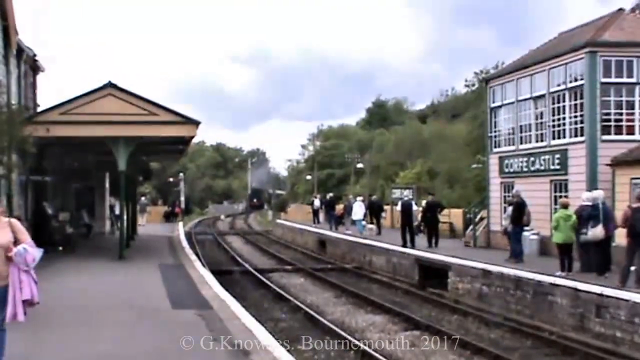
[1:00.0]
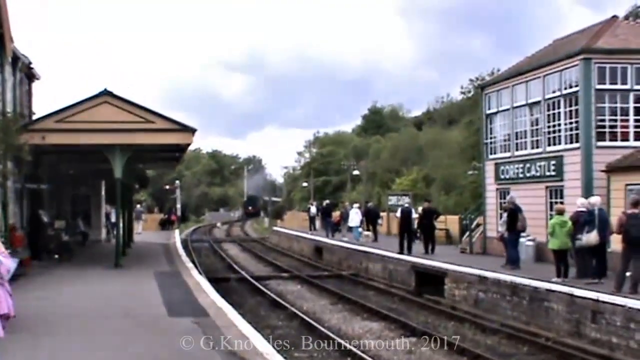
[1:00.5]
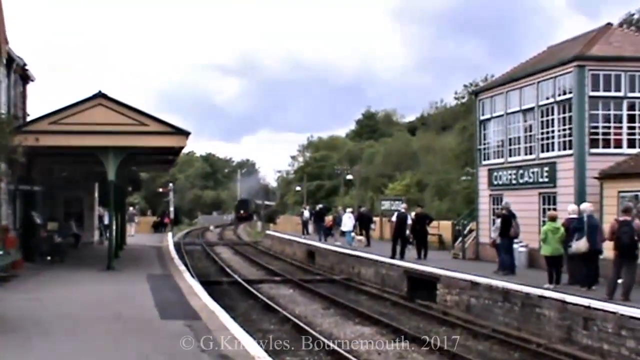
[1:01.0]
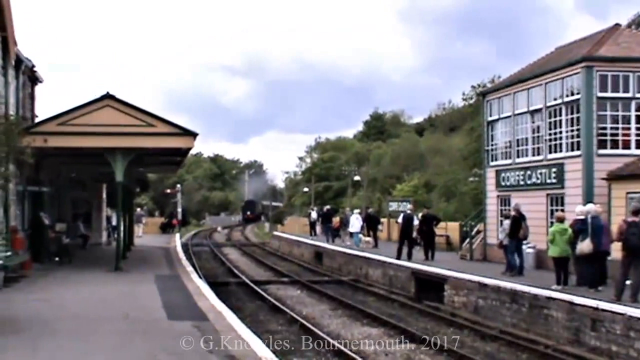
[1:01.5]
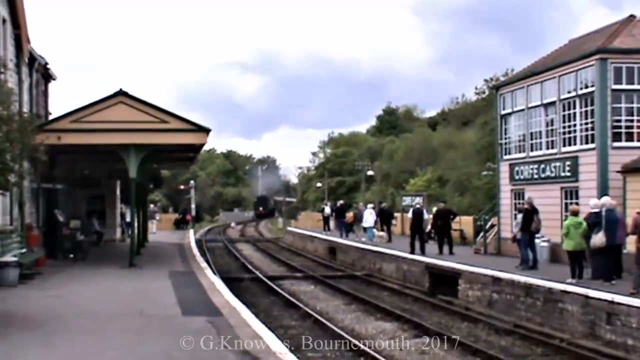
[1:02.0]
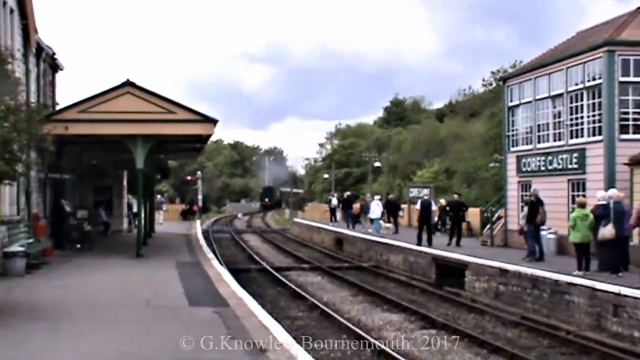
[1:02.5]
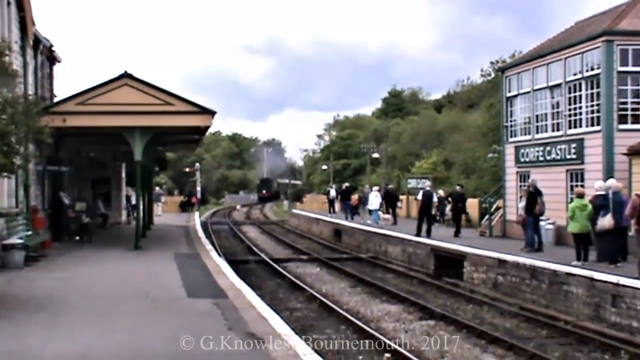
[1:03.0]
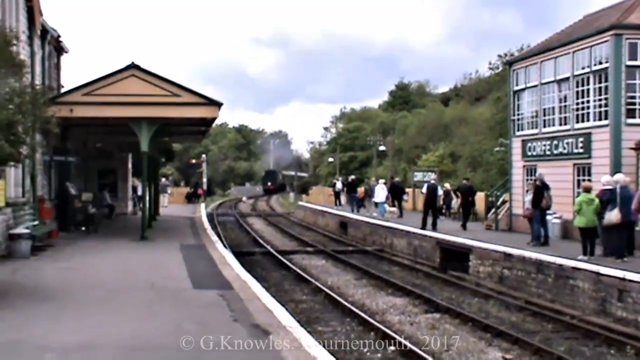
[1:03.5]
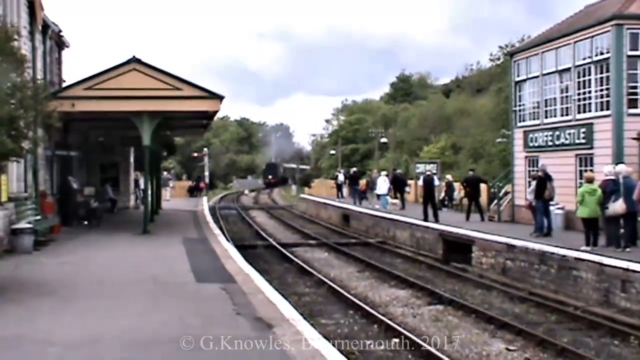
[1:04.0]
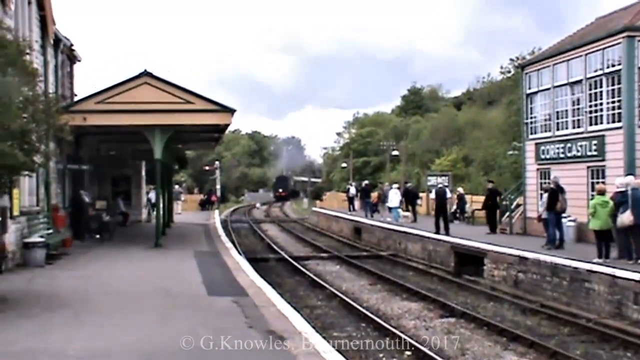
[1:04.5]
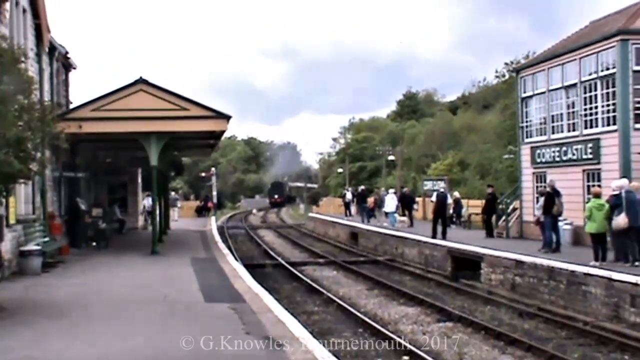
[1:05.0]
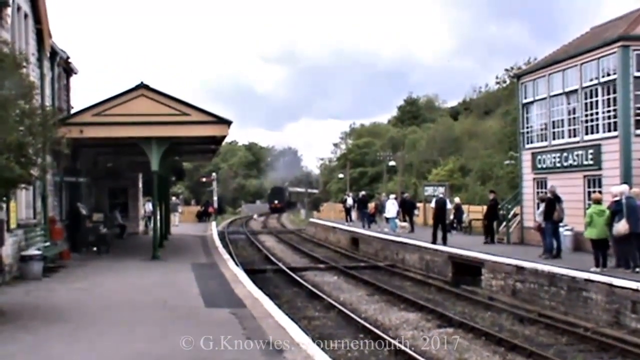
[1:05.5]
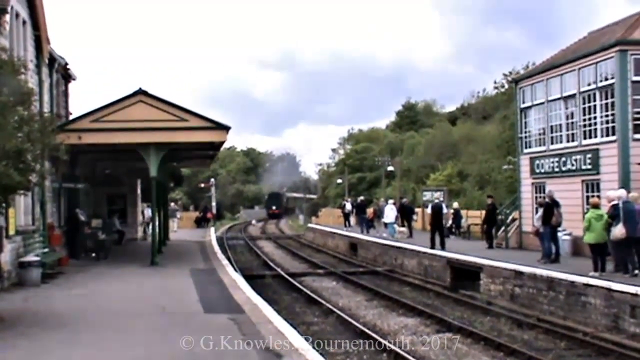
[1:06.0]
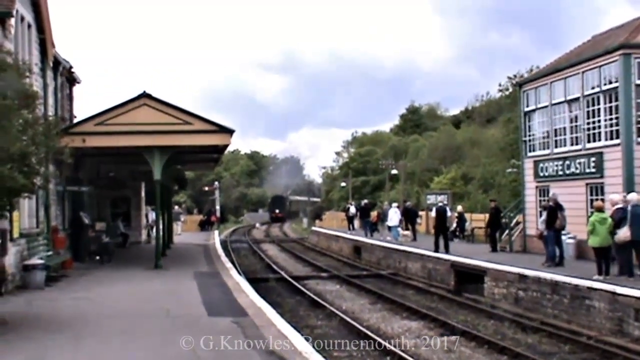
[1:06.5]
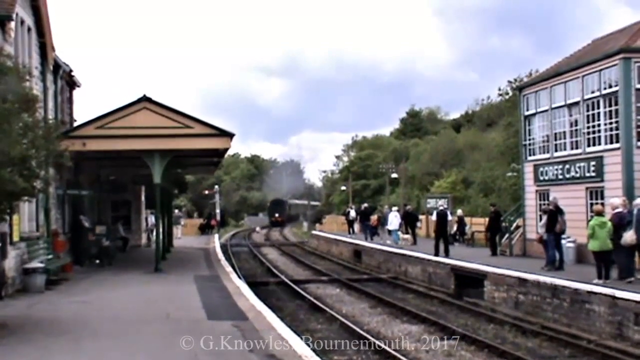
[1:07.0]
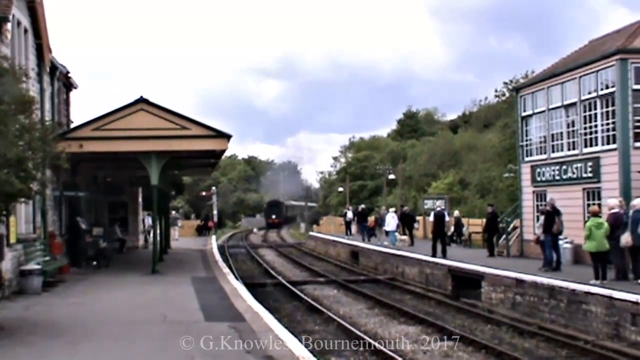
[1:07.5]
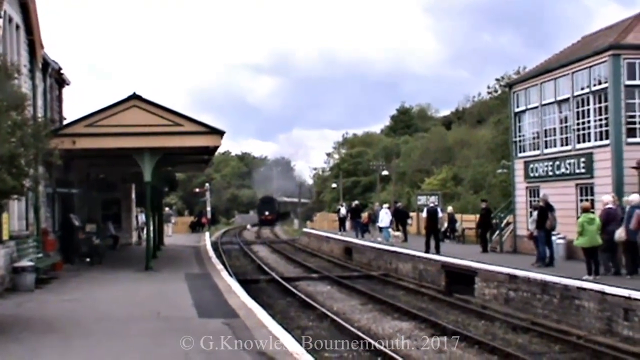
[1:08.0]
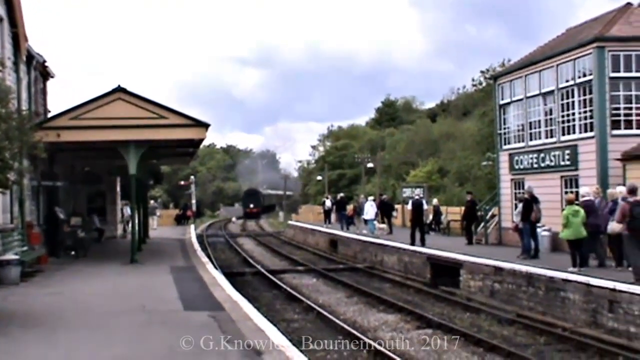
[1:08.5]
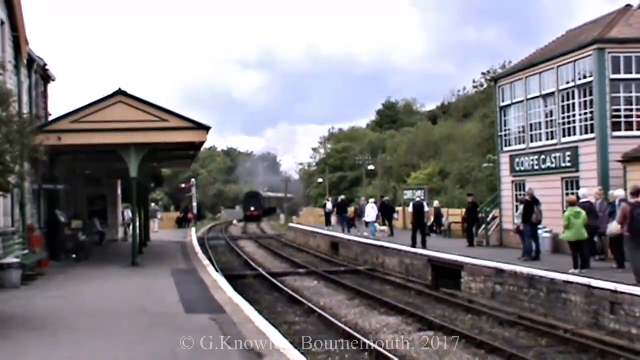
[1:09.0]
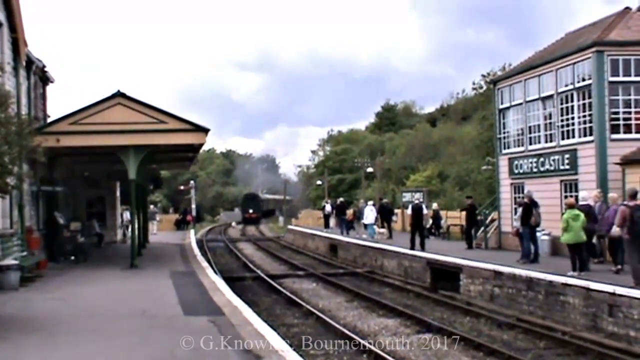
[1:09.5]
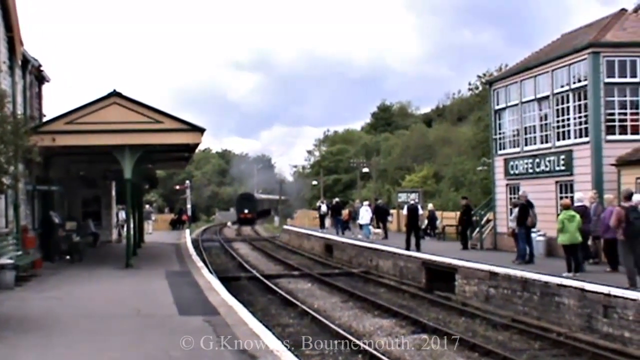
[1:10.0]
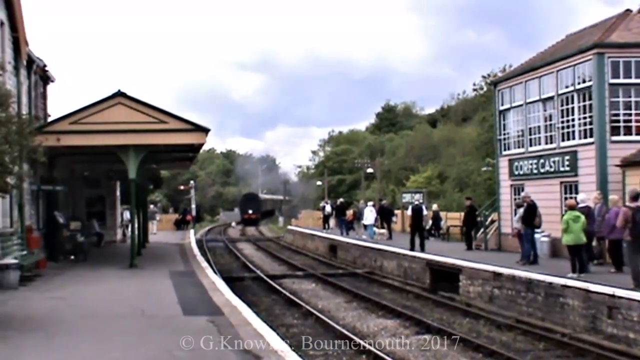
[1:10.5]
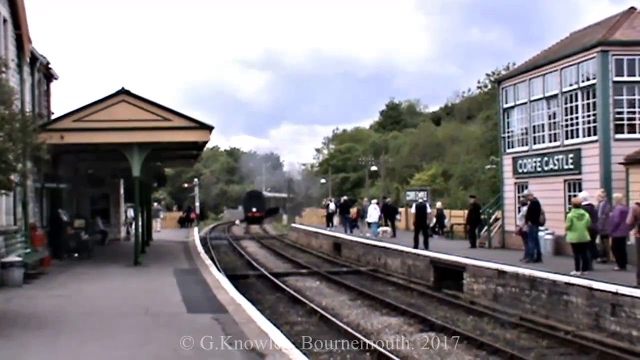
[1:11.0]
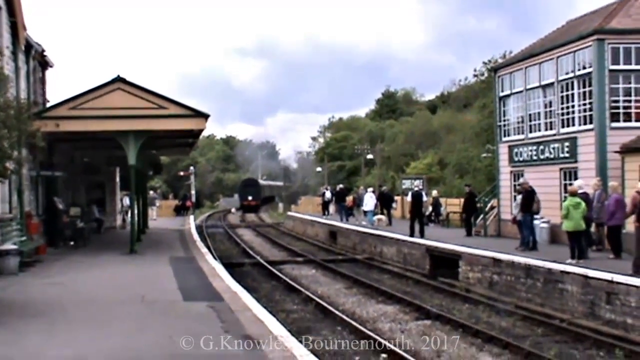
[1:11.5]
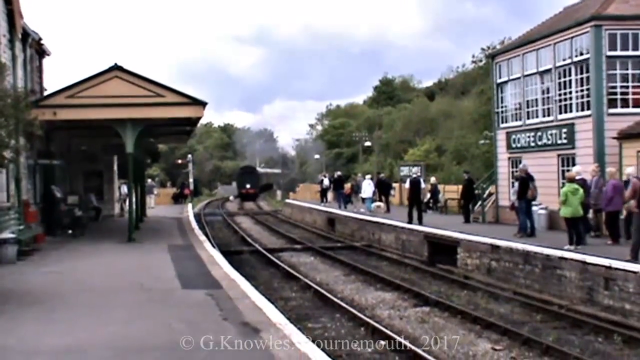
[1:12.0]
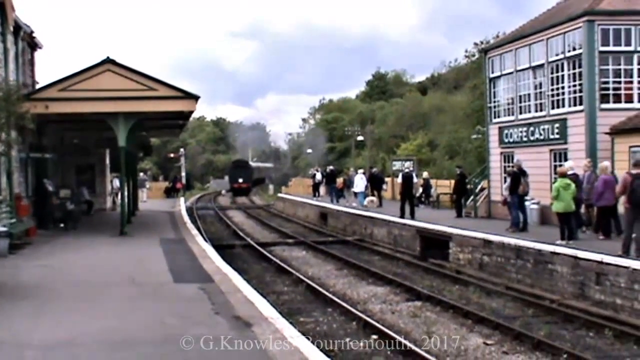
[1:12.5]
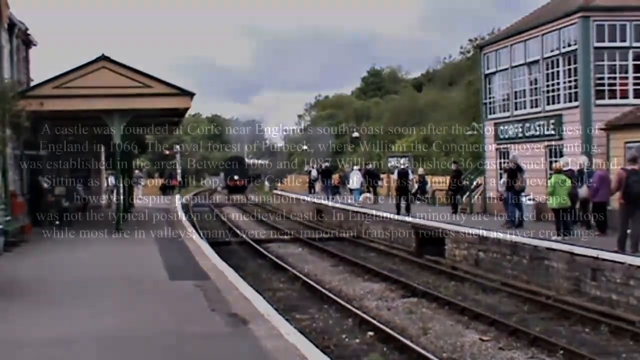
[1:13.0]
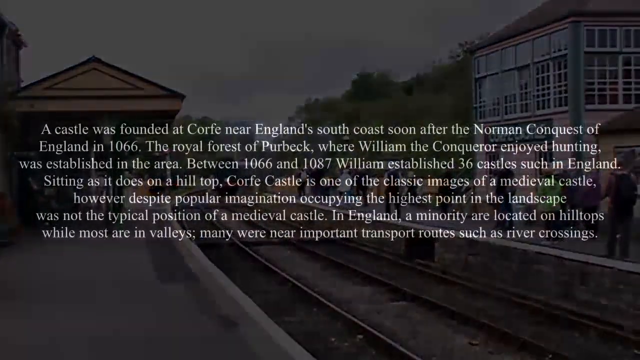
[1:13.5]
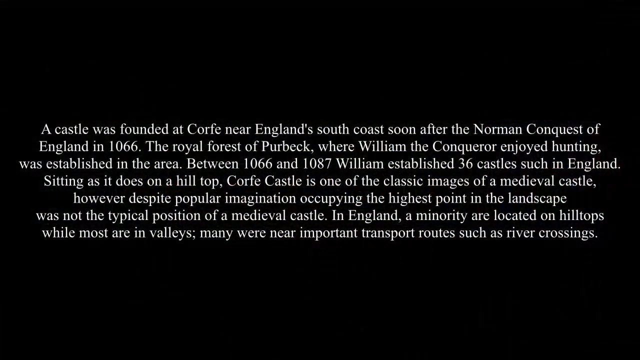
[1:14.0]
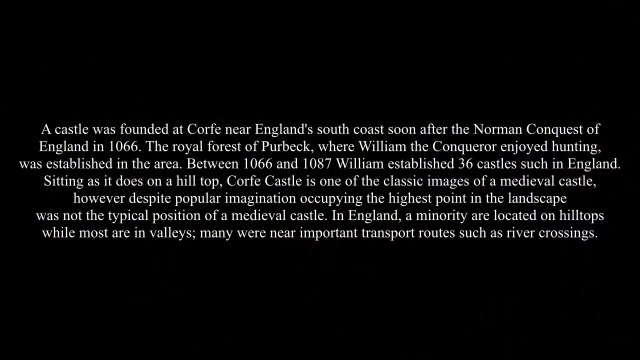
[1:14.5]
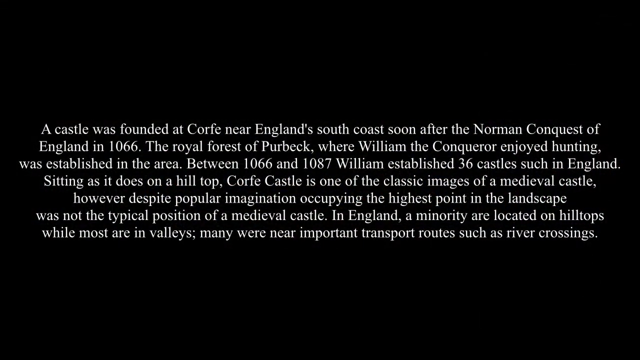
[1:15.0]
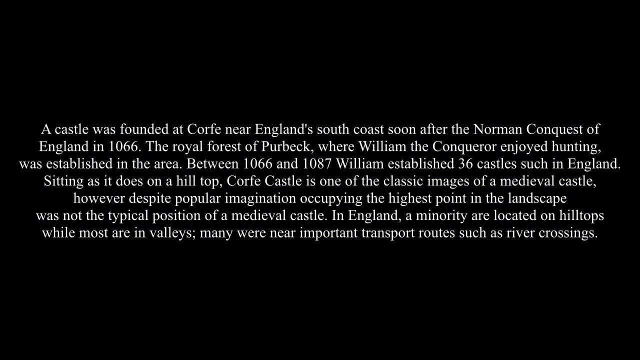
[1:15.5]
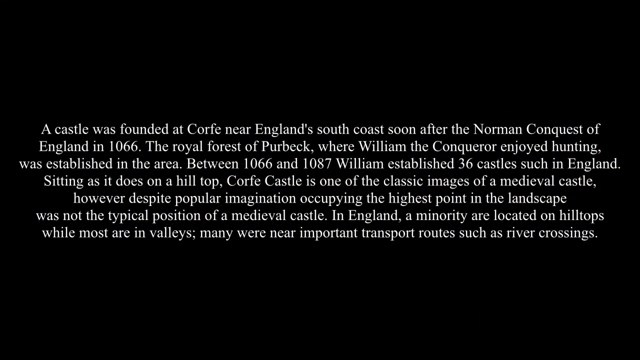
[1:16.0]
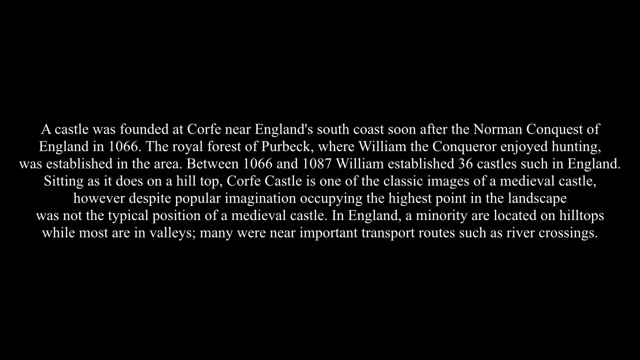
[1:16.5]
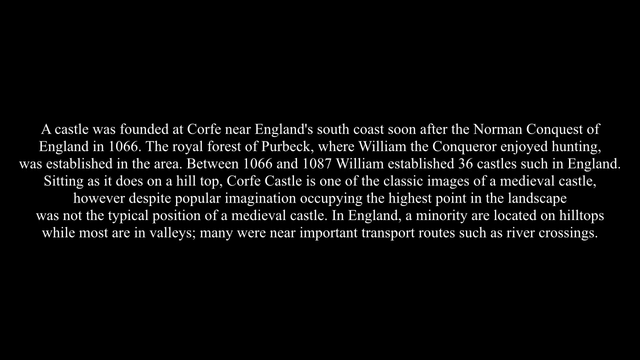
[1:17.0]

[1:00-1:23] More of the disused train line is shown, and then a train comes toward the viewer very slowly; it is black with a little red at the bottom. Next, a large paragraph of text appears, beginning "a castle was founded at Corfe near England's south coast soon after the Norman Conquest of England in 1066. The Royal Forest of Purbeck where William the Conqueror enjoyed hunting was established in the area." It continues with lines including "Corfe Castle is one of the classic images of a medieval castle" and "In England a minority are located on hilltops while most are in valleys. Many were near important transport routes such as river crossings."